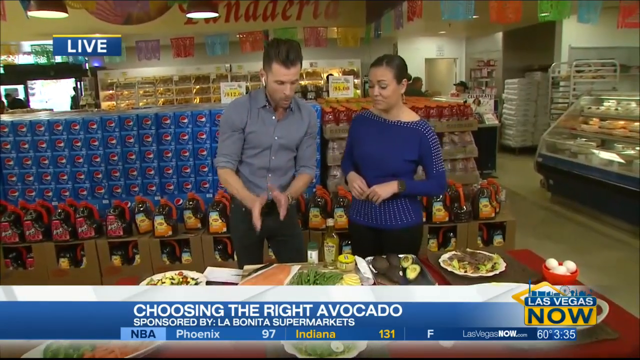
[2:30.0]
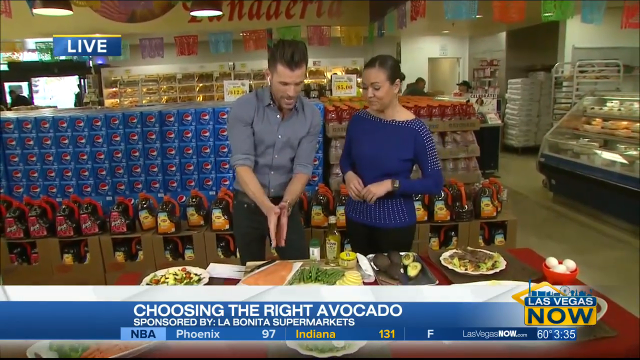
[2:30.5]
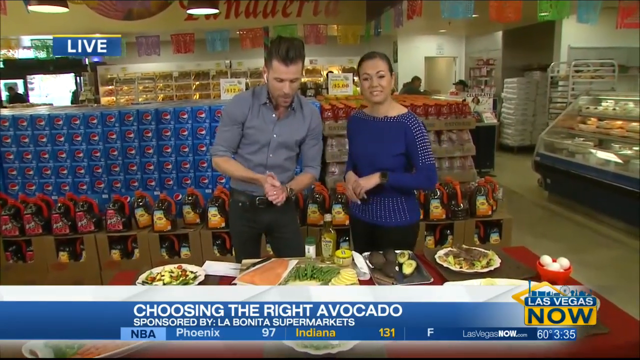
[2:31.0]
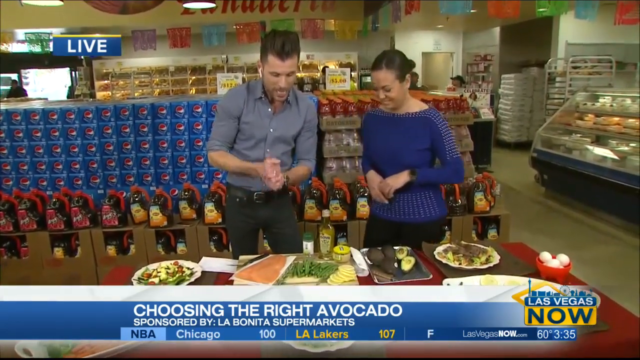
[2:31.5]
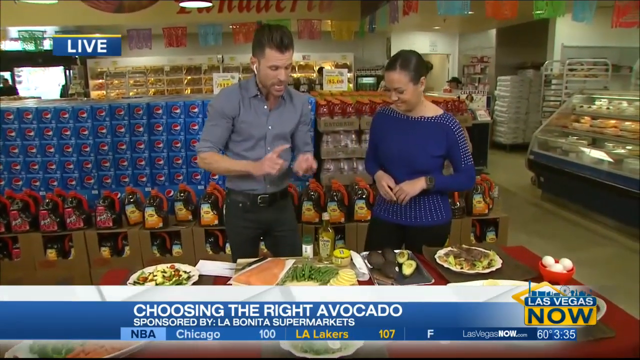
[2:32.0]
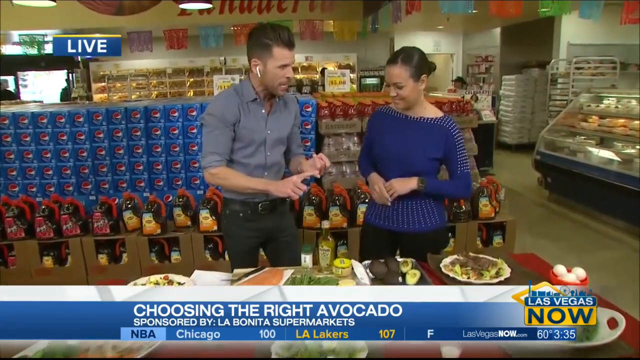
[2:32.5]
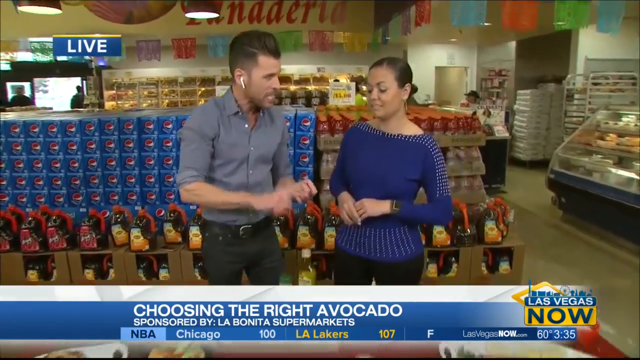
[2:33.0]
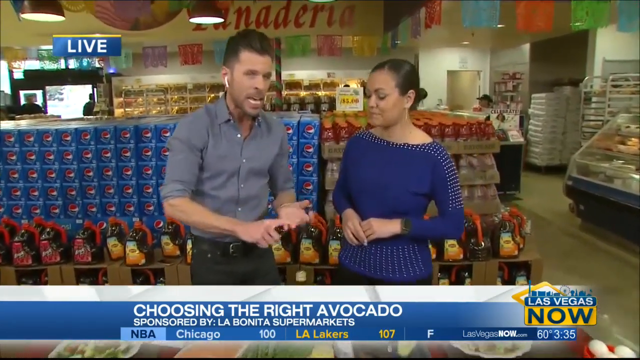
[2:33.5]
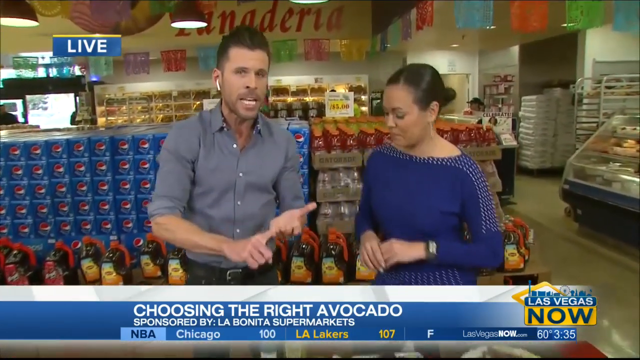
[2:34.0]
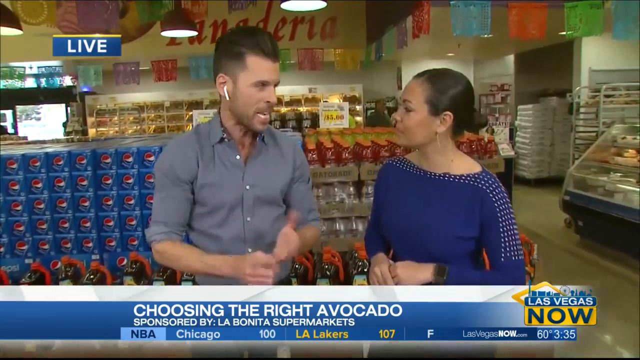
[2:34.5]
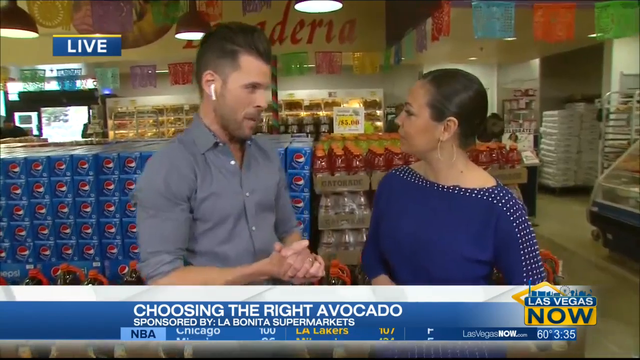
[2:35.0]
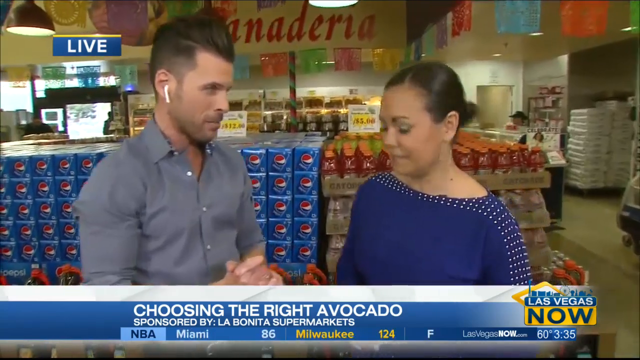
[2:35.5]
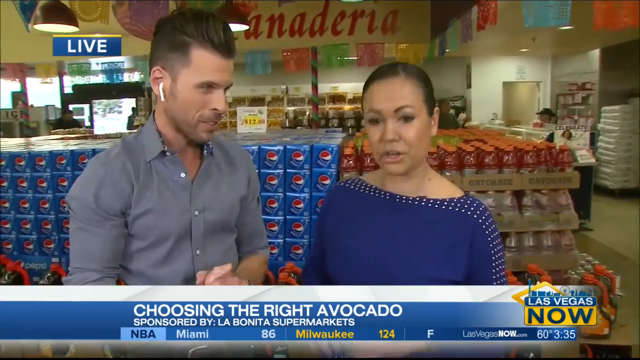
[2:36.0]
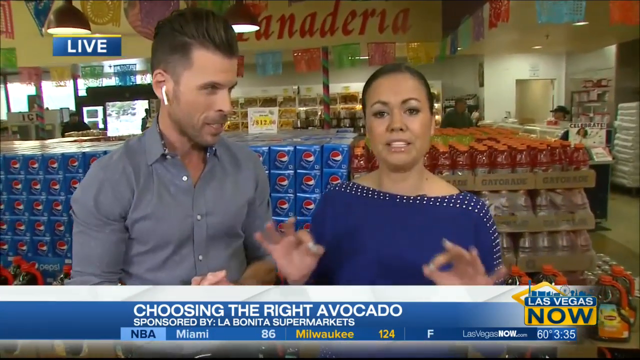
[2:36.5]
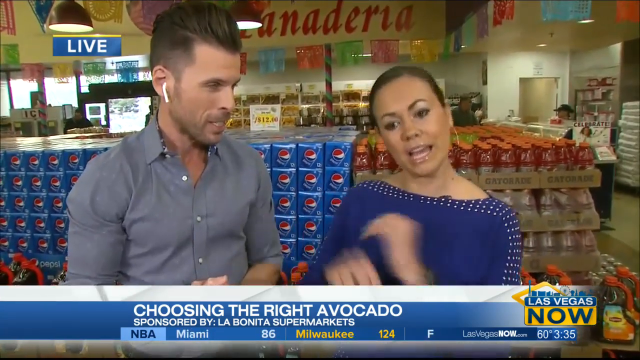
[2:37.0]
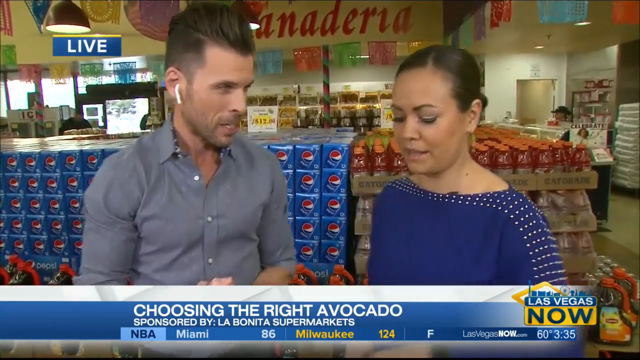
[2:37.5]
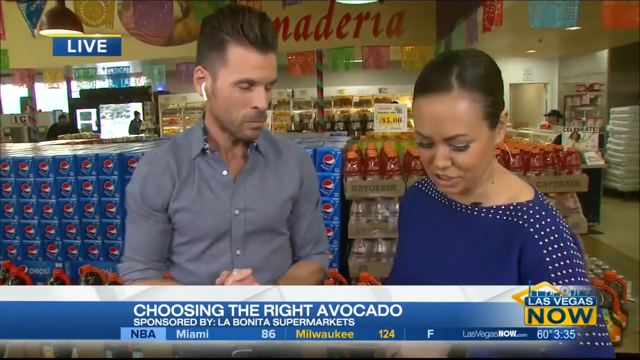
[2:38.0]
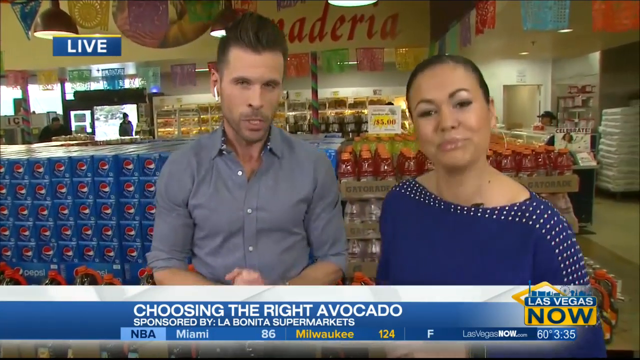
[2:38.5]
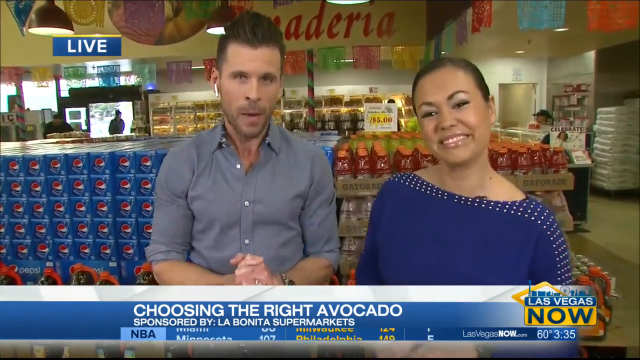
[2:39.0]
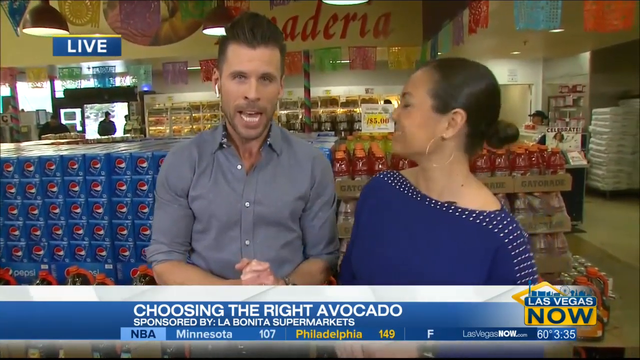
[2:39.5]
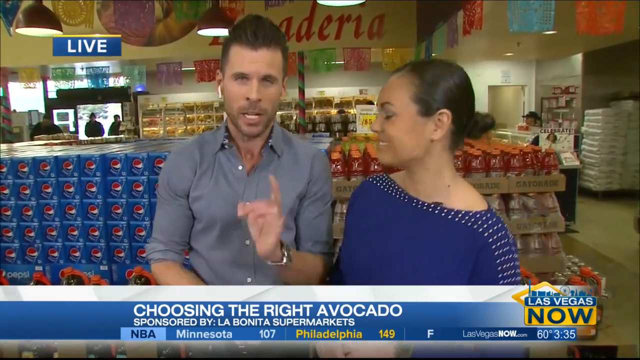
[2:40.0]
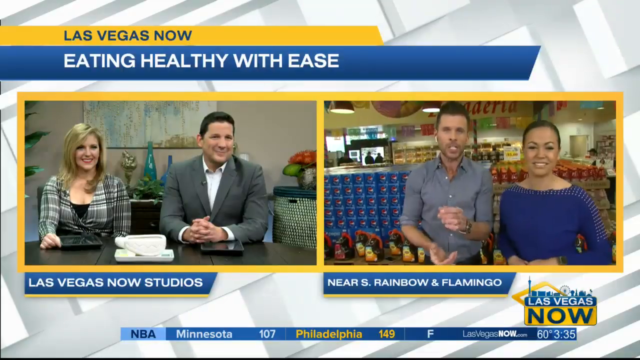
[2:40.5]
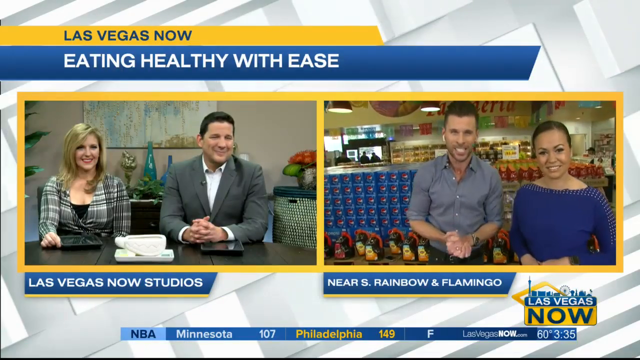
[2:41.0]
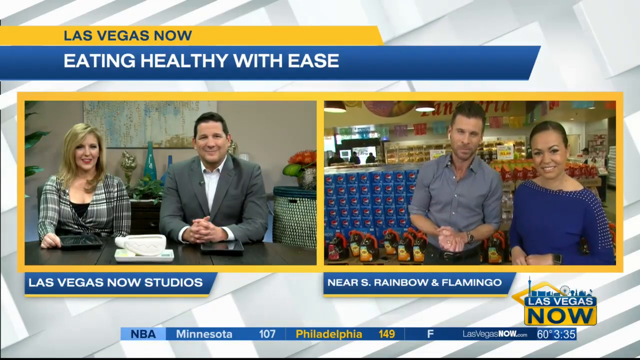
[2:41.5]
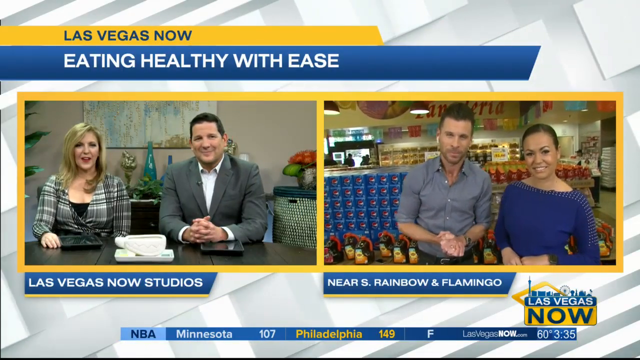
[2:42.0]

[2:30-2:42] Two people talk: a man, apparently a reporter, with white ear pods in, wearing a gray shirt and black pants, and a lady in a blue shirt and black pants. They look at a lot of food, and the text reads "choosing the right avocado," sponsored by LA Bonita Supermarkets. Behind them are a lot of drinks, such as Pepsi and Gatorade, and there is a bakery section and deli inside the supermarket. He talks with his hand, pointing at something on the table full of food. The camera moves in toward the two people as they talk. Text then reads "Las Vegas now" and "eating healthy with ease." Two people appear in the Las Vegas now studios, along with the two people from the supermarket and the text "near as rainbow and flamingo."